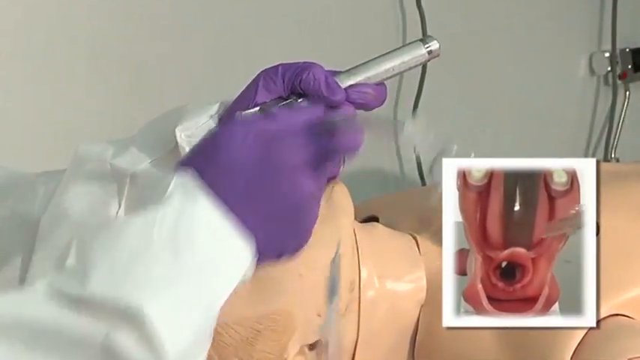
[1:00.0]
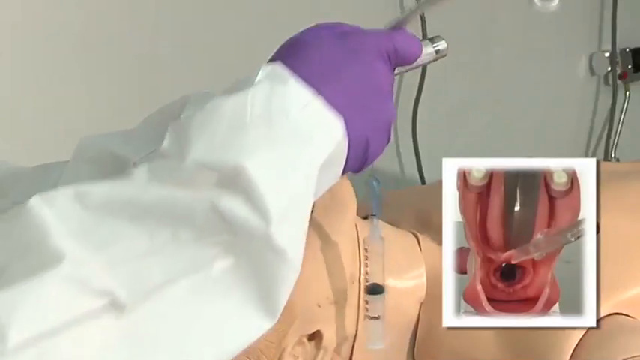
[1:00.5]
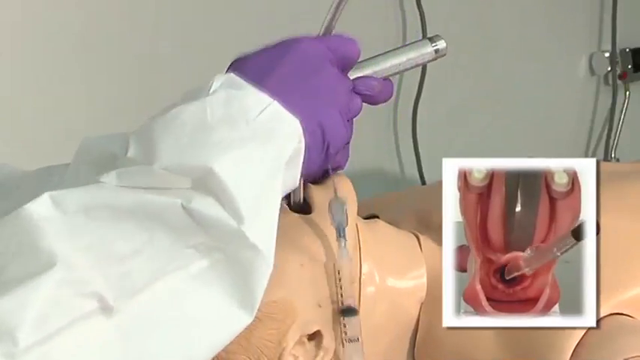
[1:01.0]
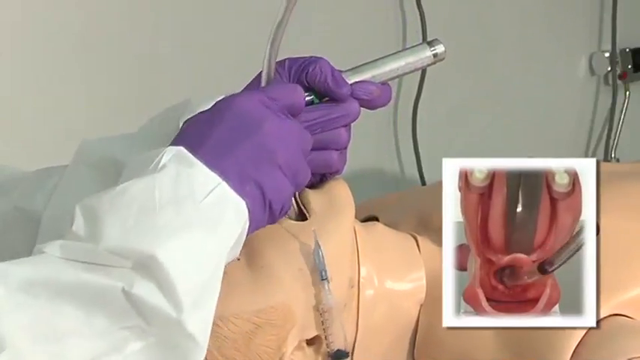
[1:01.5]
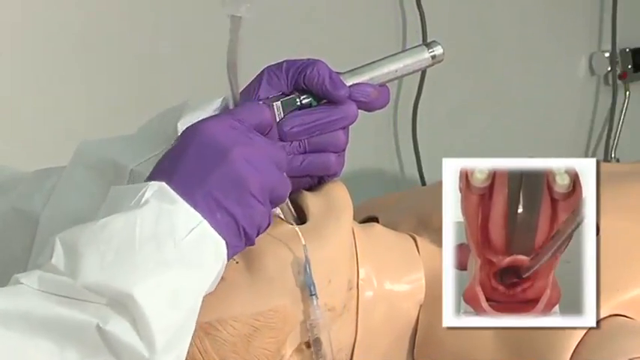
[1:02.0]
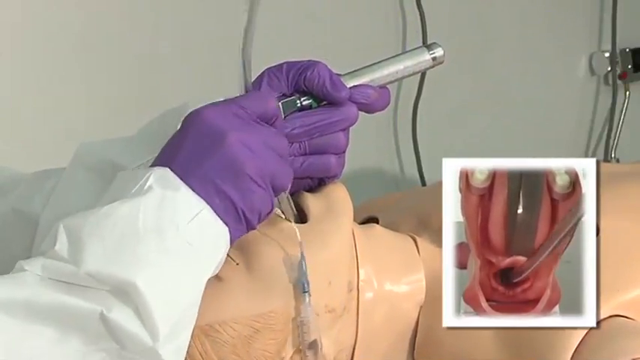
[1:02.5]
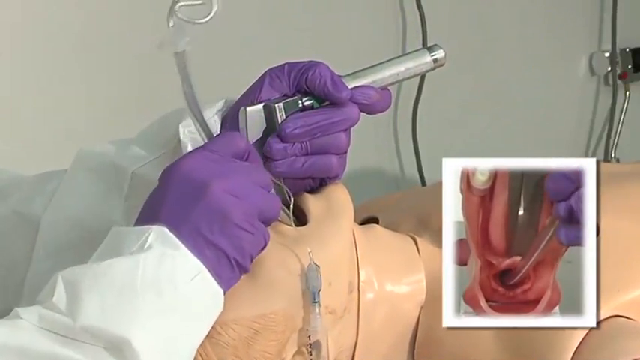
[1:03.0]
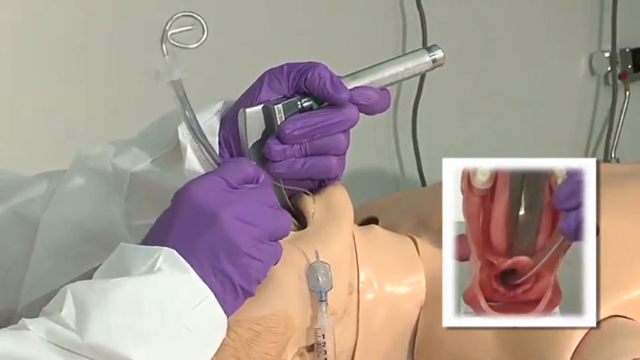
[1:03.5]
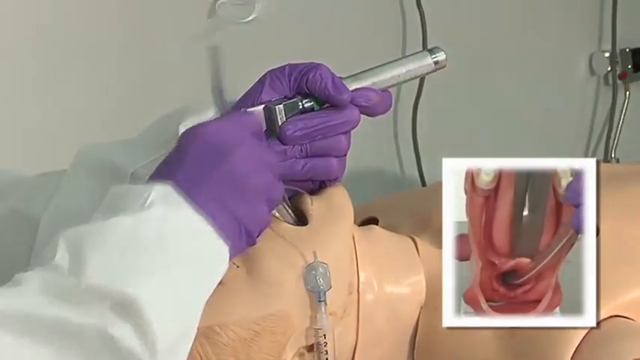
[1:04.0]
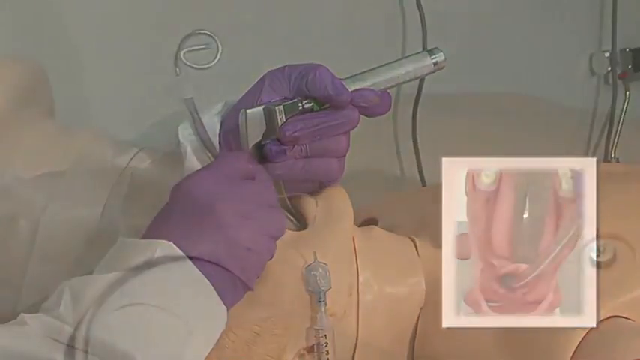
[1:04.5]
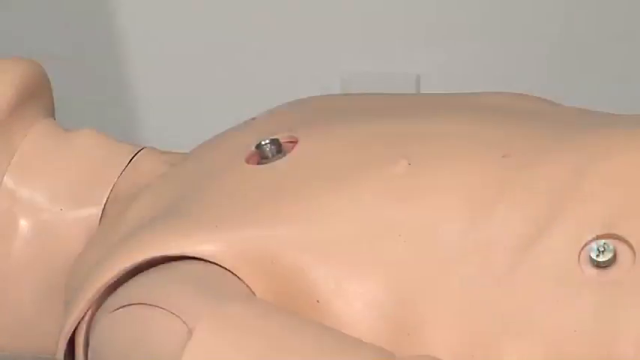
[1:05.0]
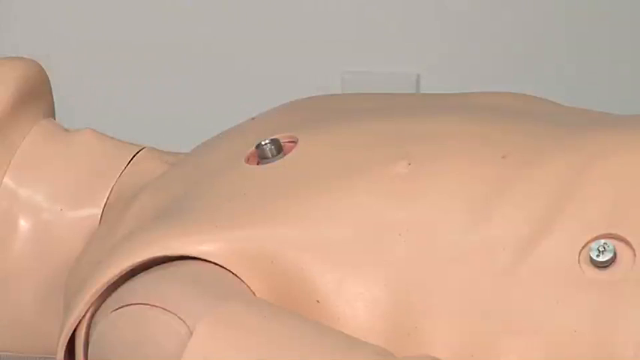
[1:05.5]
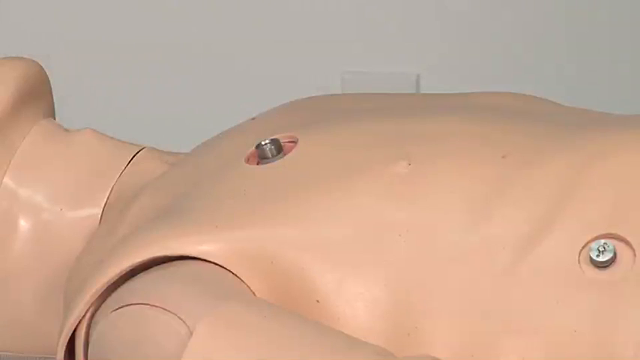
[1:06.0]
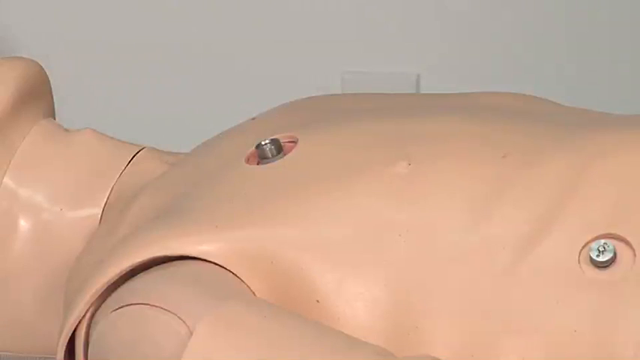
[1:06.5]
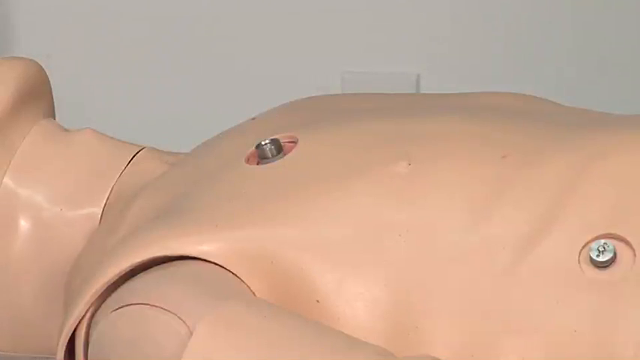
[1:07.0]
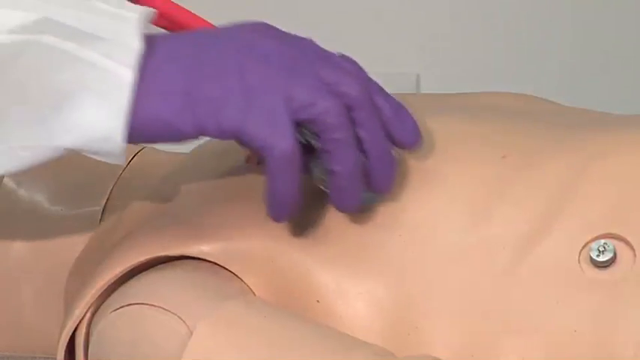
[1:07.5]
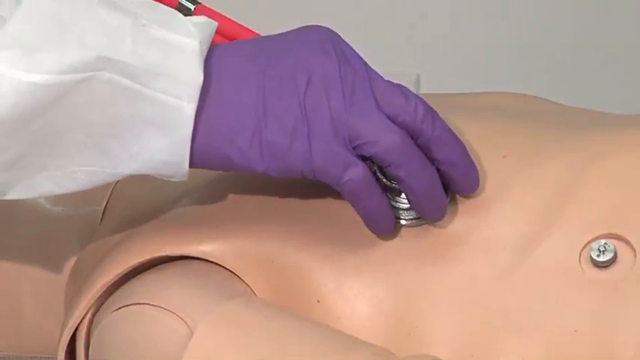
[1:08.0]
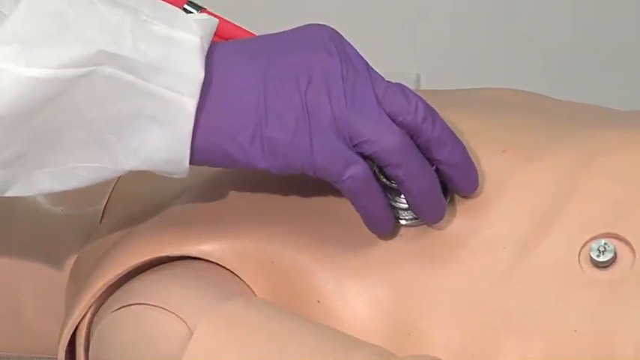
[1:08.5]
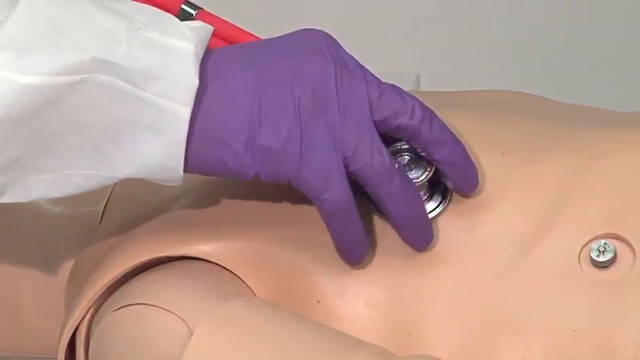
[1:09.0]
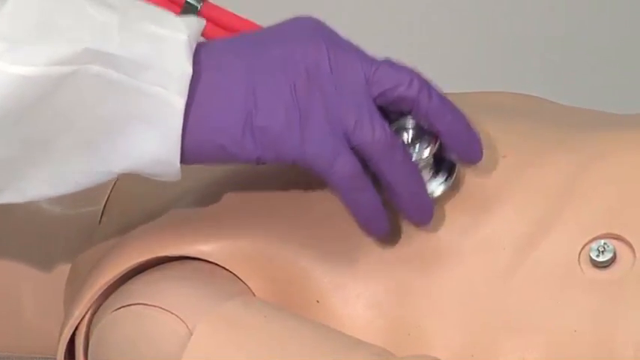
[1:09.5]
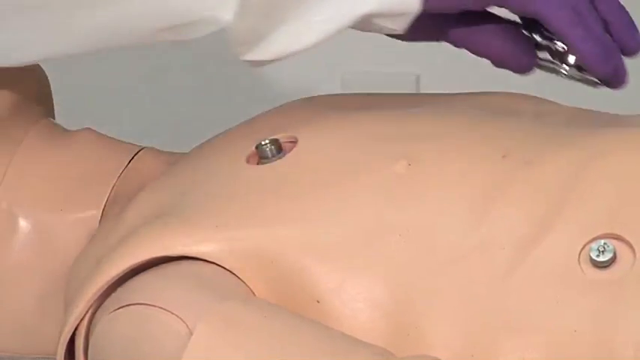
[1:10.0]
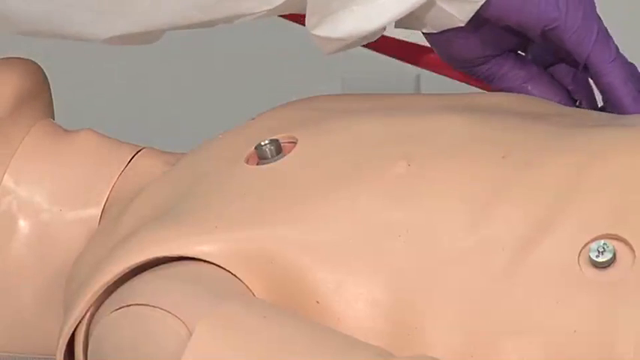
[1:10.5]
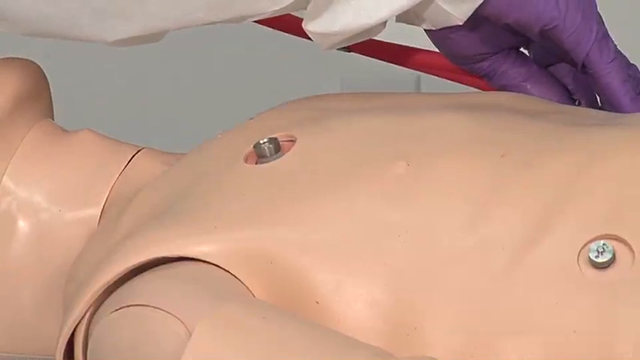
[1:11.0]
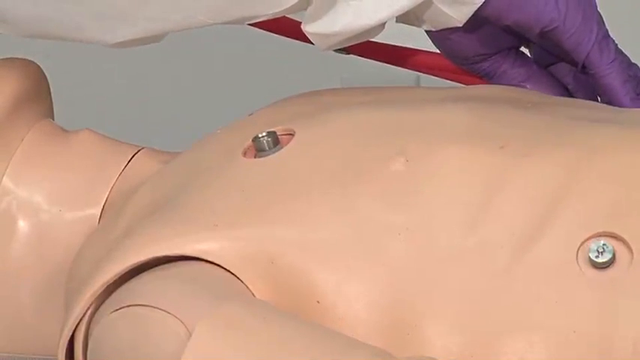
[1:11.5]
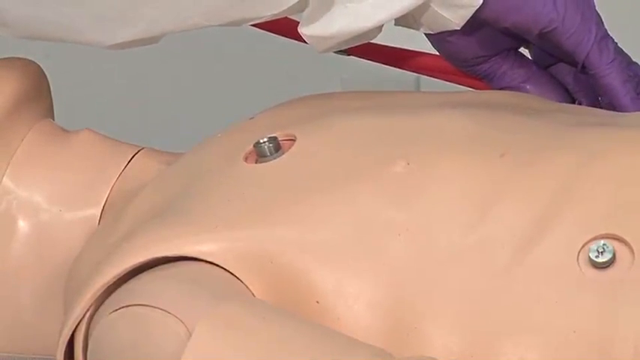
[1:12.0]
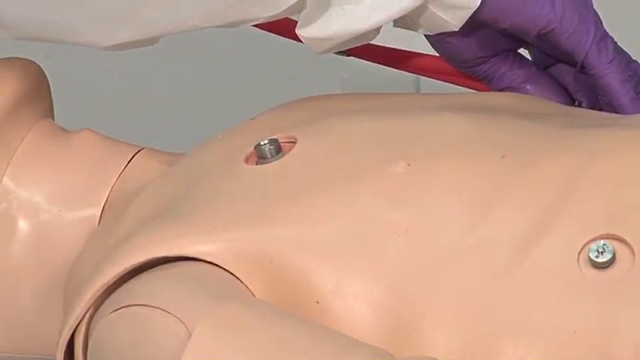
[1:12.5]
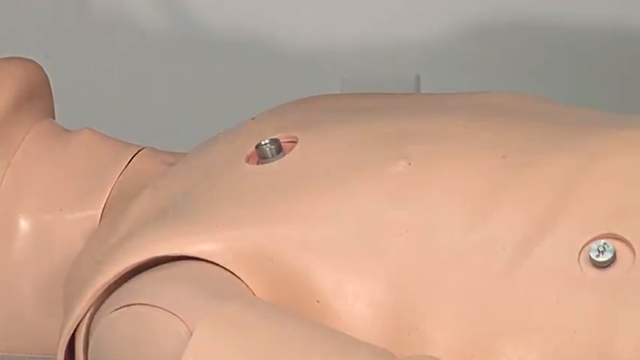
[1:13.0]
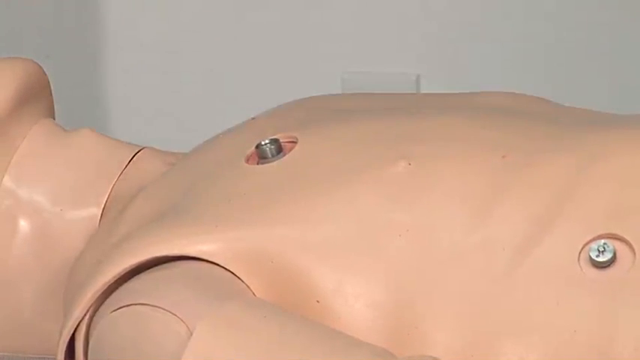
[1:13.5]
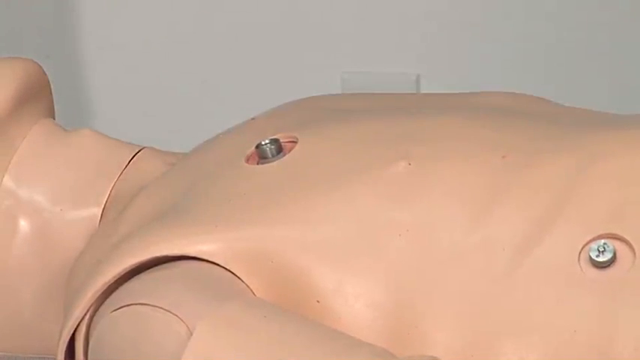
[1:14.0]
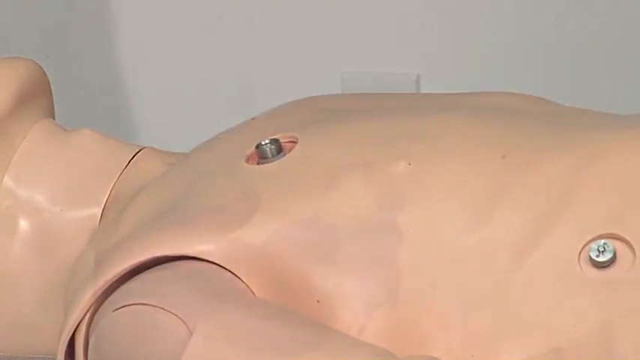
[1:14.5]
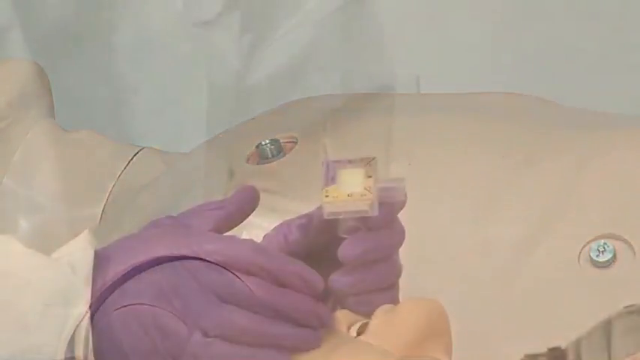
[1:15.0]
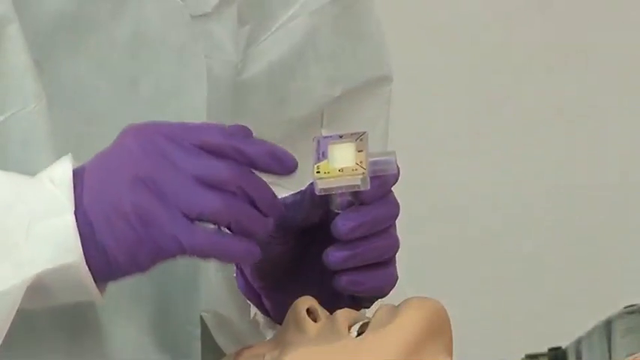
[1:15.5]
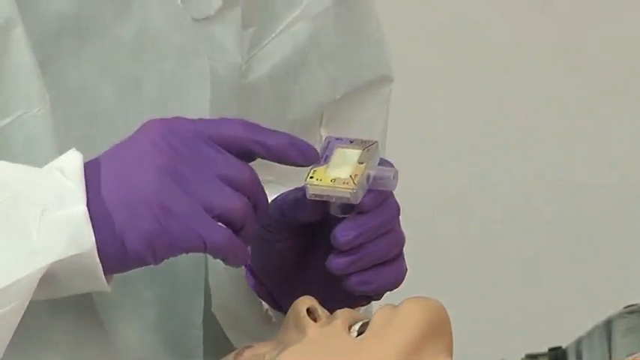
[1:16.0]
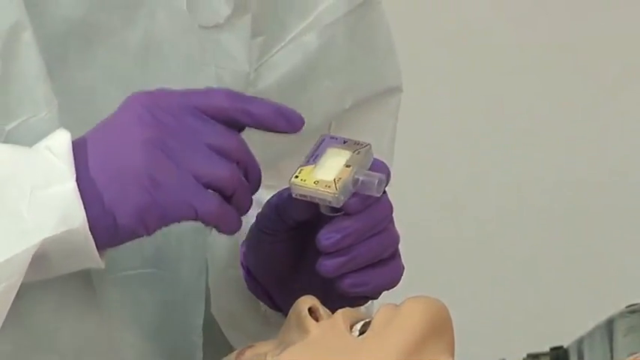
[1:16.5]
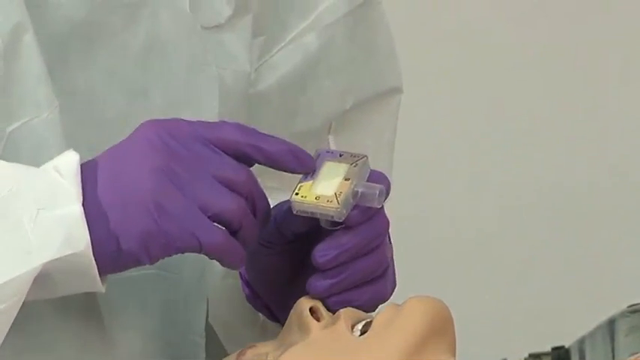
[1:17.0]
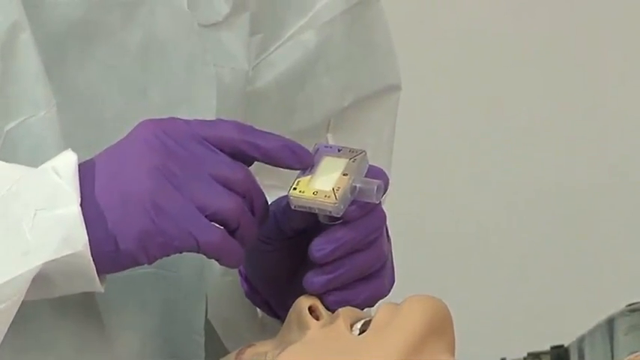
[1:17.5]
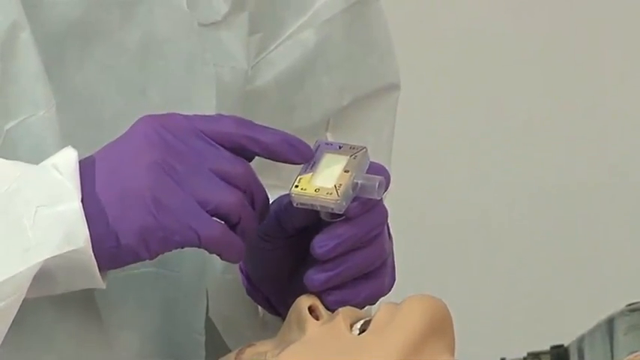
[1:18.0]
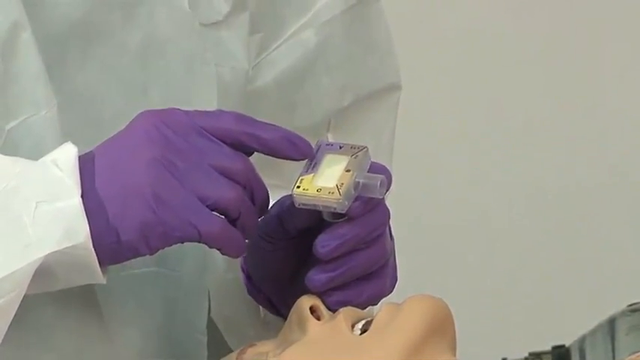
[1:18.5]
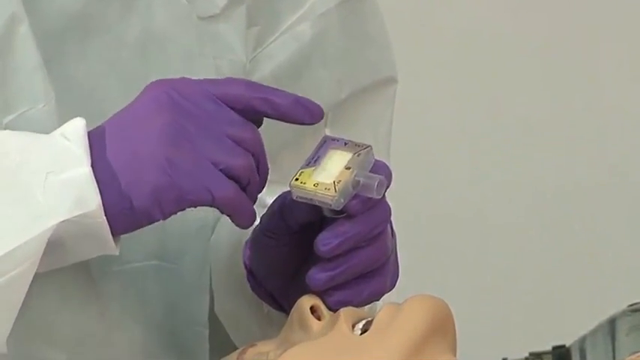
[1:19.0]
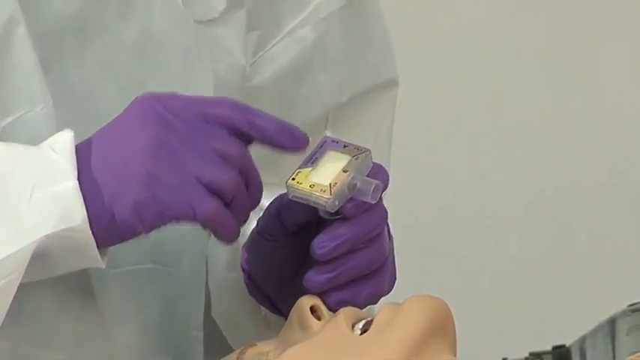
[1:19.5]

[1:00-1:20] A close-up shows a doctor in a white gown and purple gloves with some kind of tool put into the mannequin's mouth, while a video inset on the right side shows the tool going into the mannequin's mouth. The tool has some kind of wires attached to it. The video then transitions to the mannequin's chest, where there are what look to be metal bolts. The doctor comes in with a piece of equipment, apparently to check the heartbeat. The mannequin appears to be breathing slightly, with the chest moving up. Then the doctor, in purple gloves, holds what looks to be another kind of tool, which kind of looks like something that would give air, and points to it.